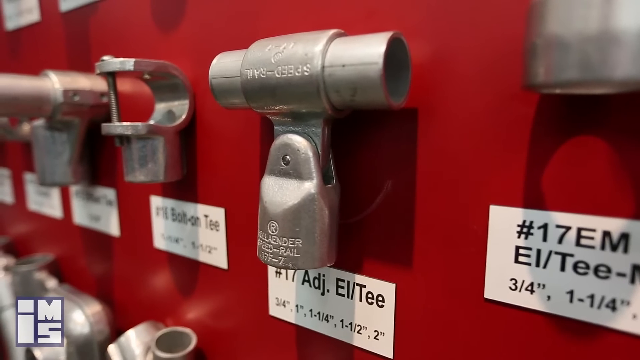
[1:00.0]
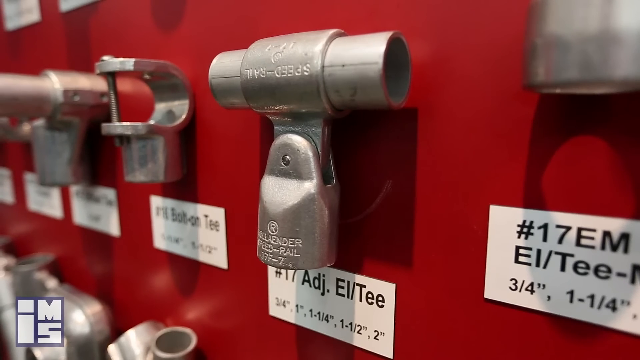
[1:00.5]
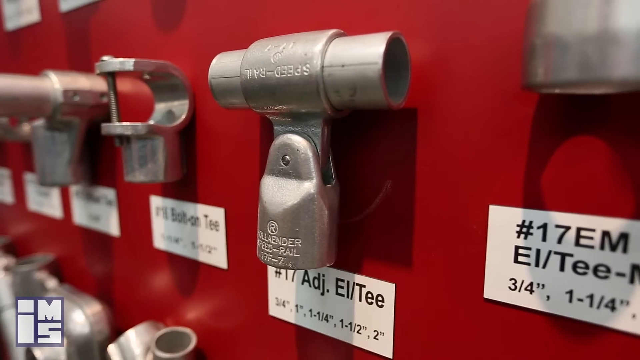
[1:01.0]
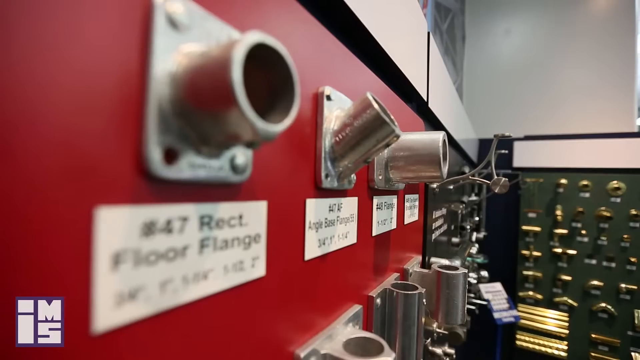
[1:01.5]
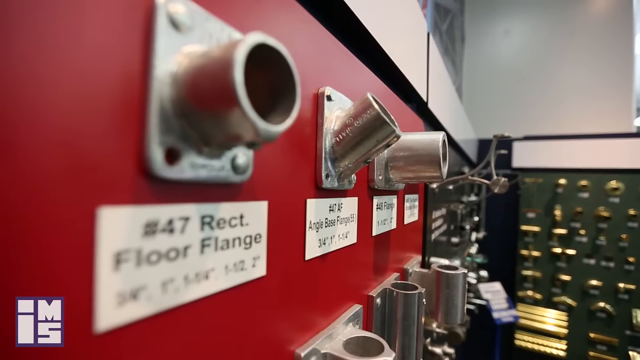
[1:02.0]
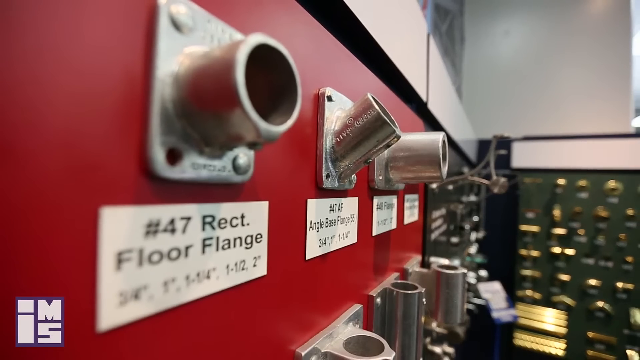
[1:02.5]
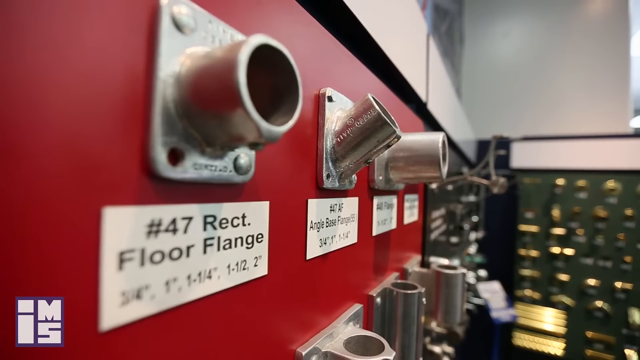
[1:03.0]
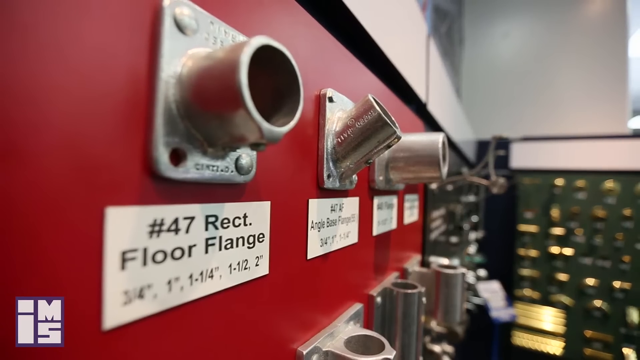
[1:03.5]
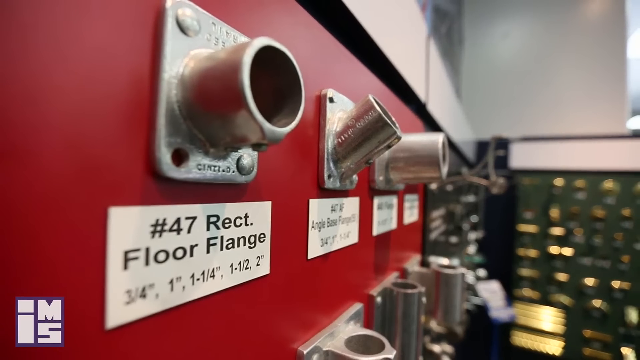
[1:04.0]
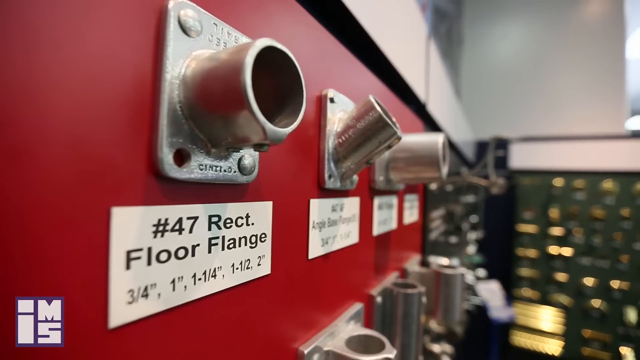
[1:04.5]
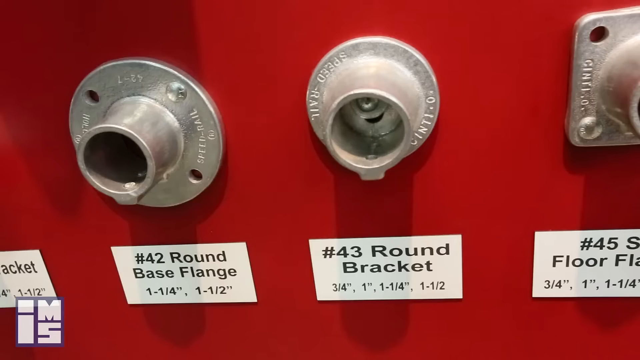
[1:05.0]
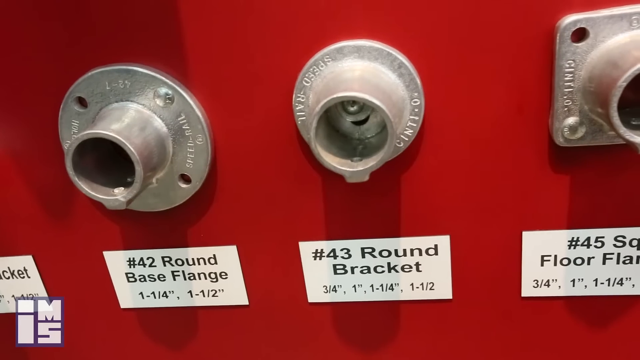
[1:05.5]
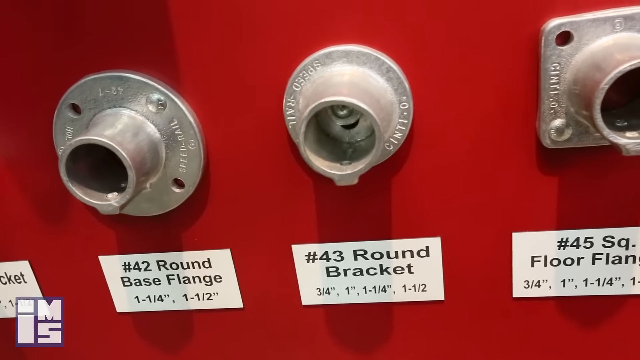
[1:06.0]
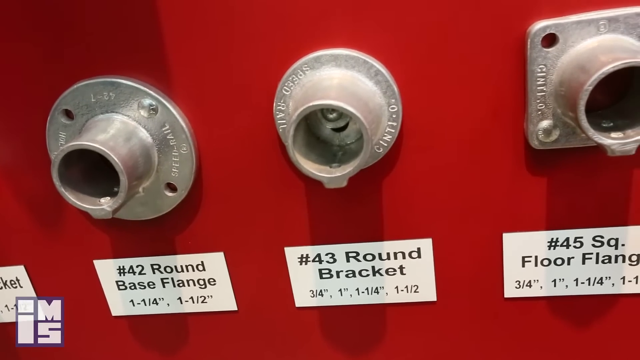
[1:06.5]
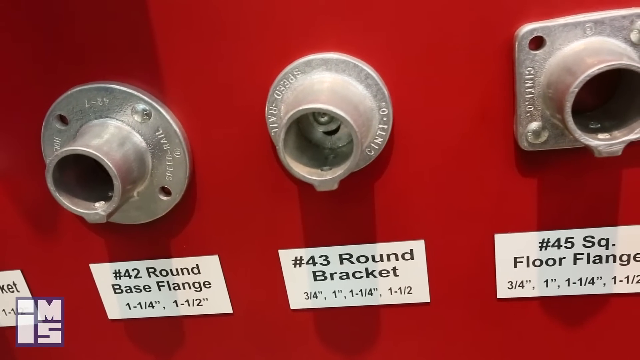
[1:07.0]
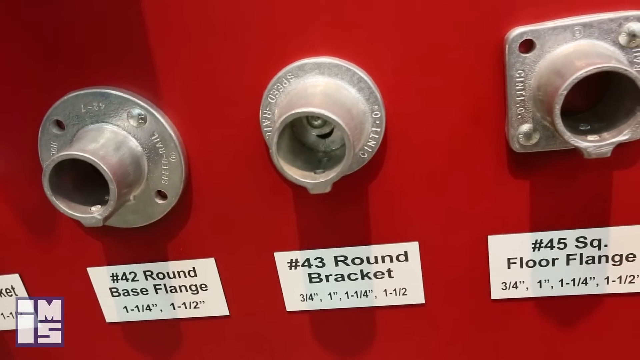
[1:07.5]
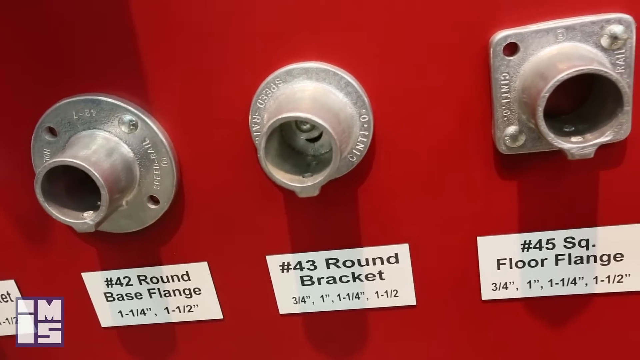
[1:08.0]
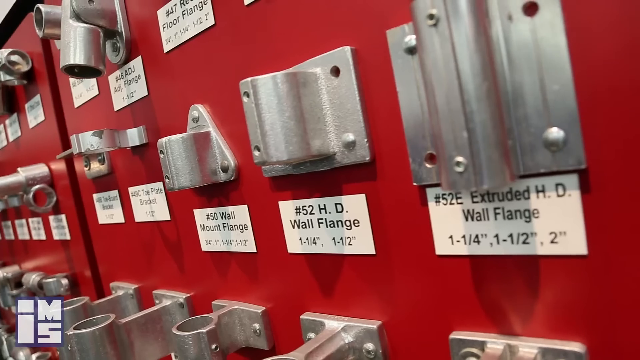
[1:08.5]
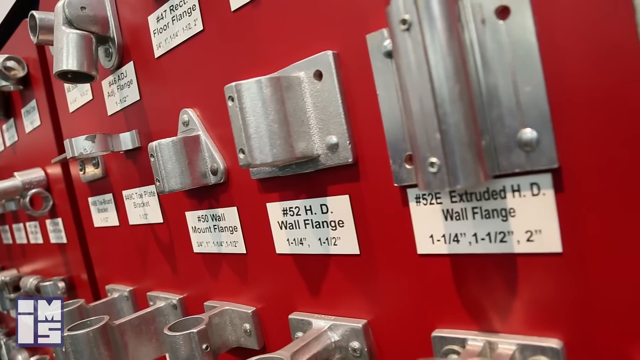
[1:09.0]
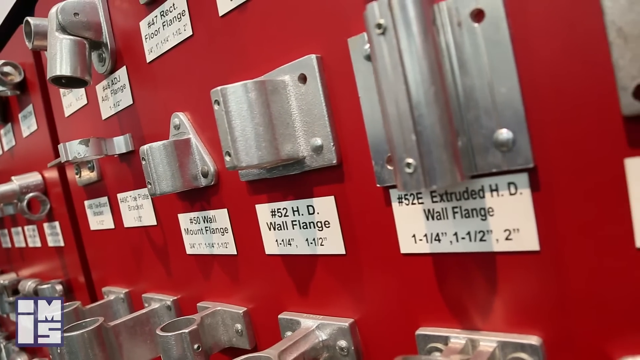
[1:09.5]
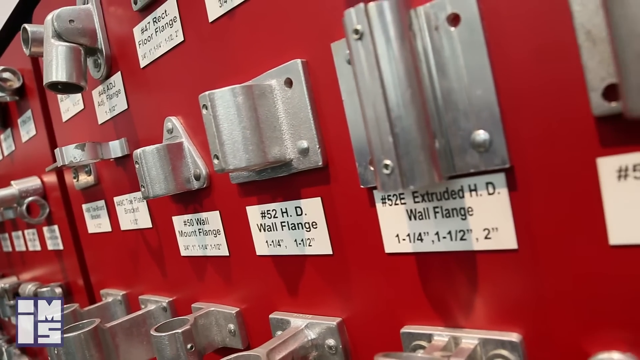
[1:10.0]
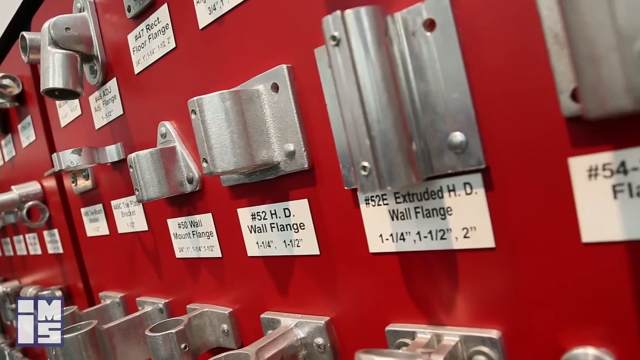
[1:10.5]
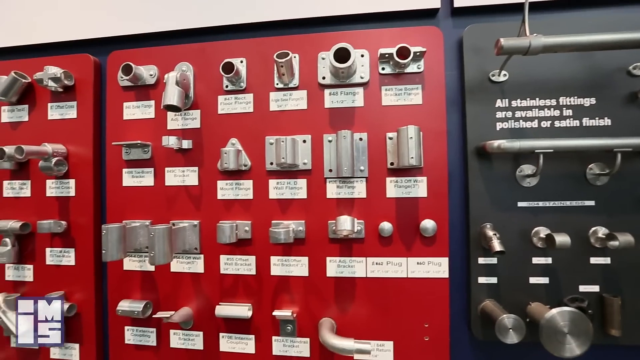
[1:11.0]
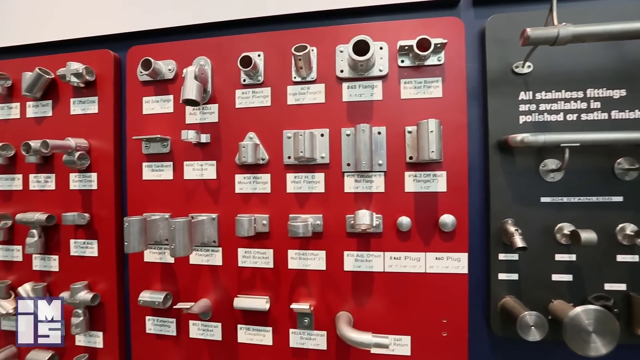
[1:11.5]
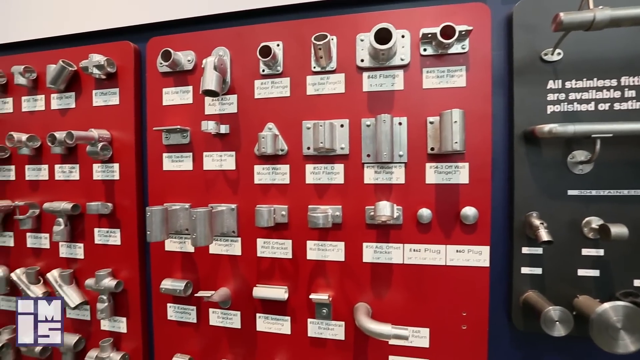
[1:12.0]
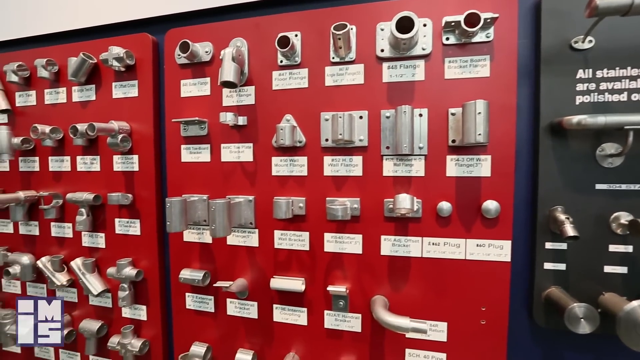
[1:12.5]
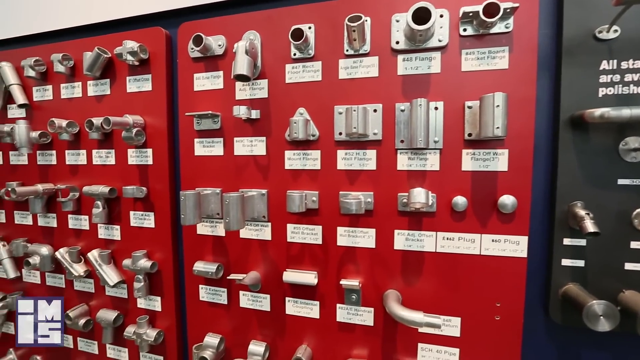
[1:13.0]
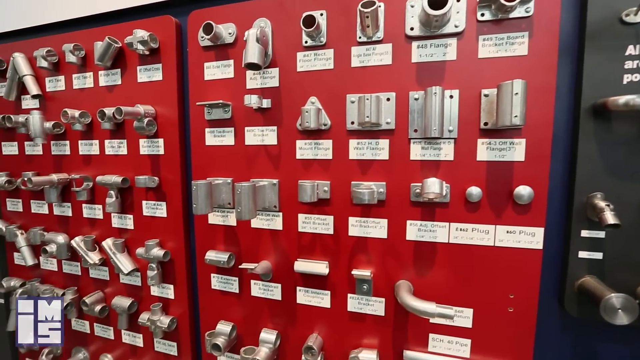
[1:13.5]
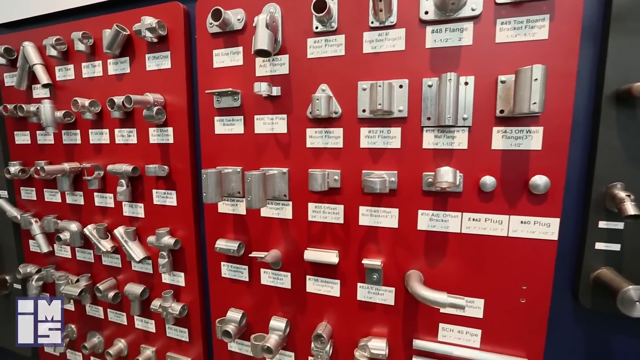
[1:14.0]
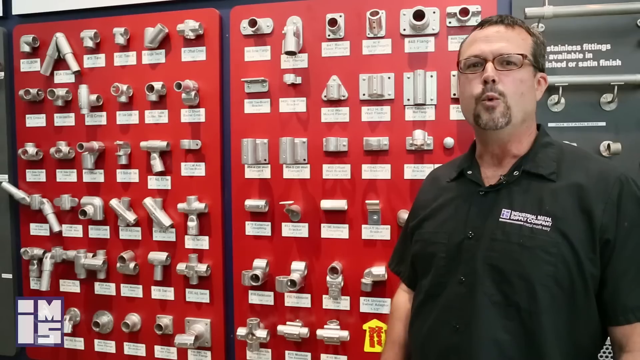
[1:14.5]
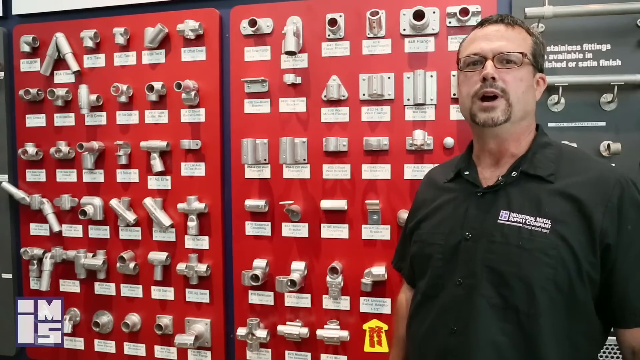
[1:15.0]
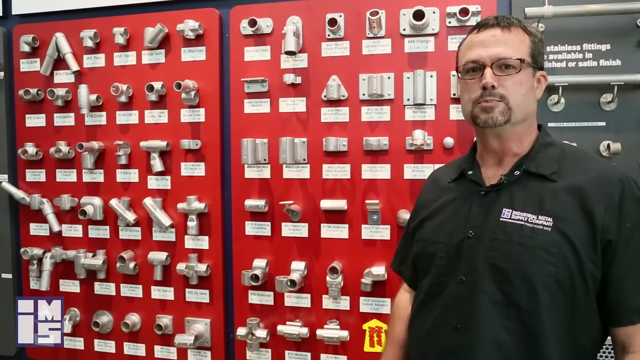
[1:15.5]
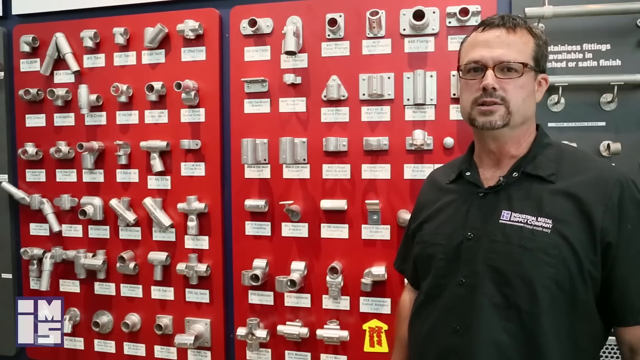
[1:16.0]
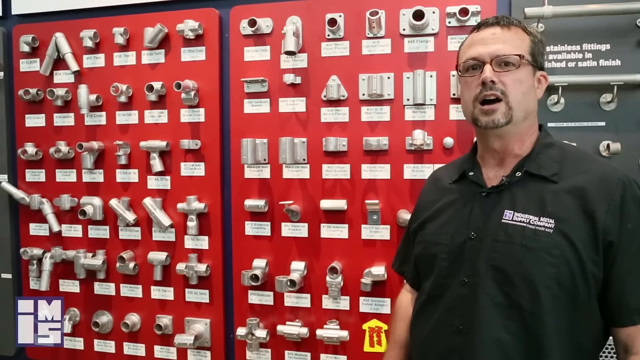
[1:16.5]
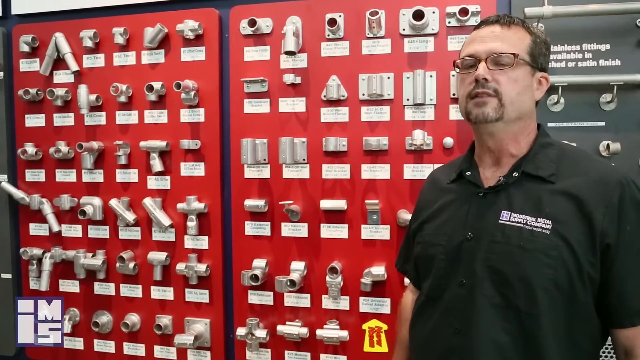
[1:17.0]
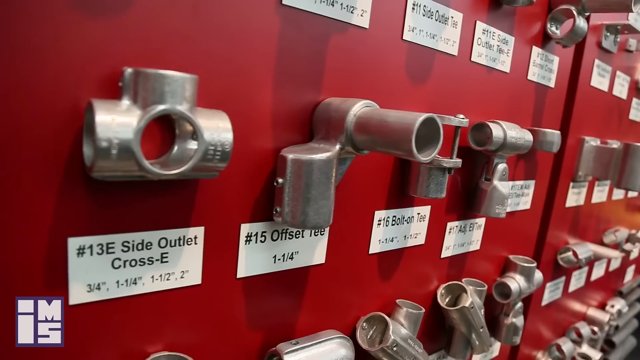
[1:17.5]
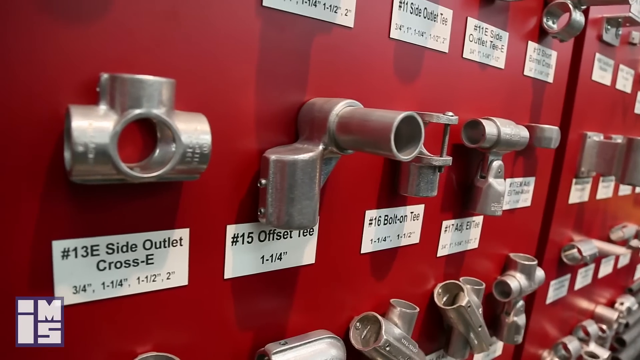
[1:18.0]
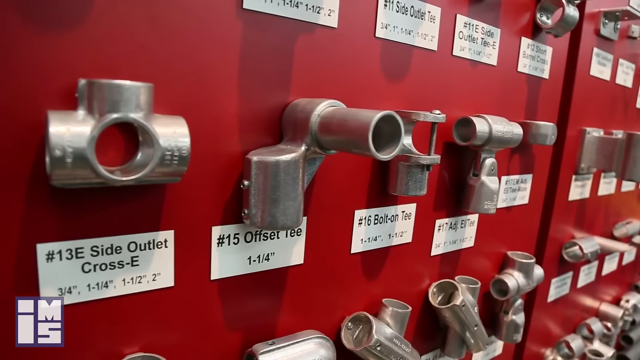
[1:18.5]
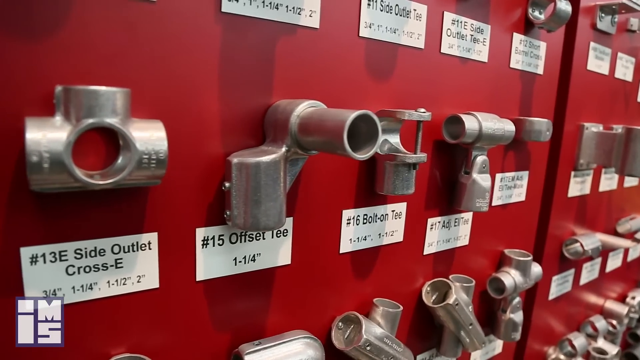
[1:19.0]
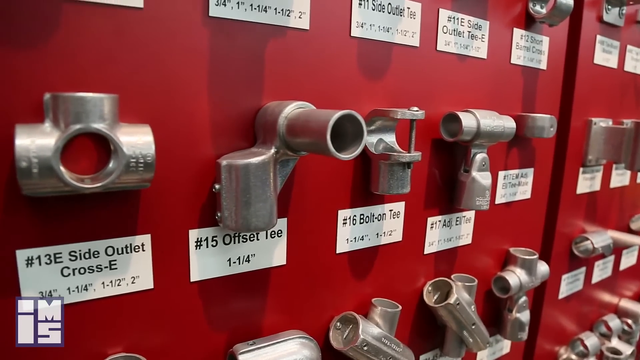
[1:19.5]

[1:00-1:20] Products advertised by the company are shown, including number plates.